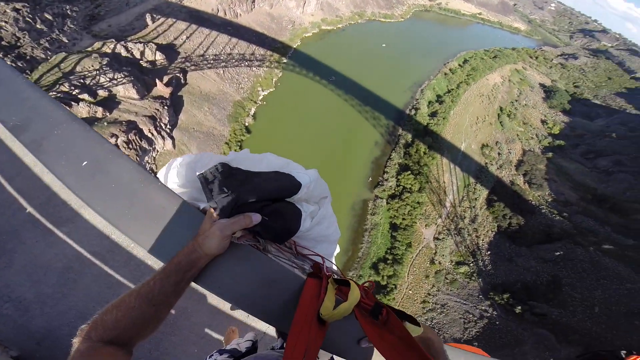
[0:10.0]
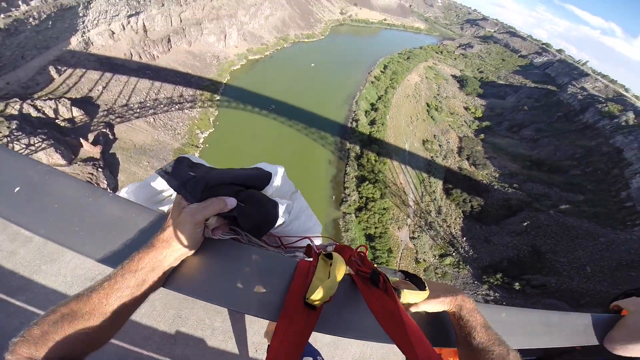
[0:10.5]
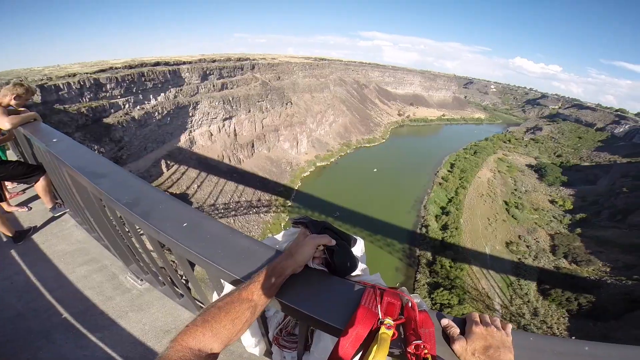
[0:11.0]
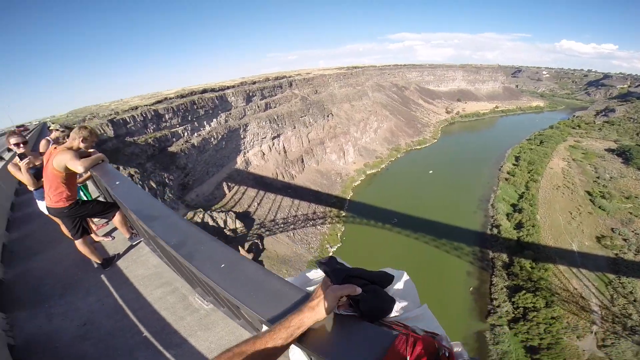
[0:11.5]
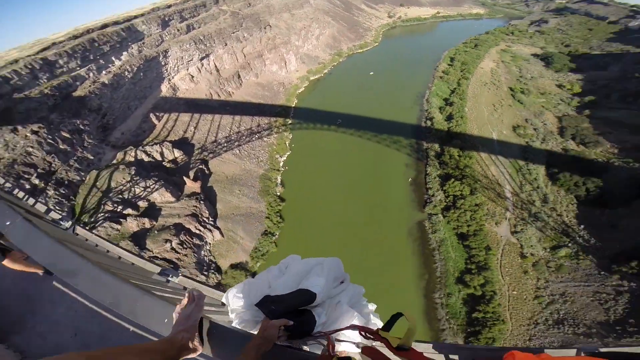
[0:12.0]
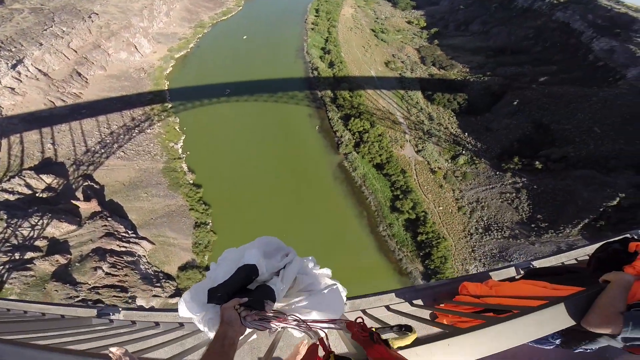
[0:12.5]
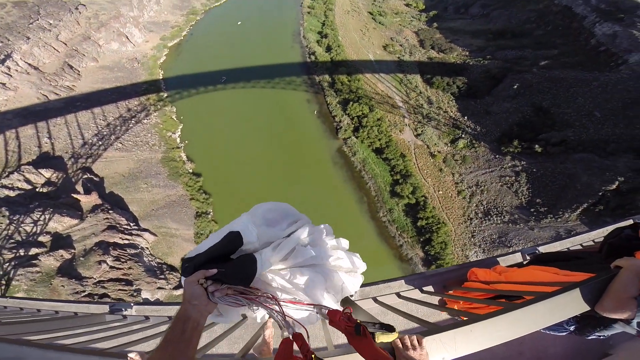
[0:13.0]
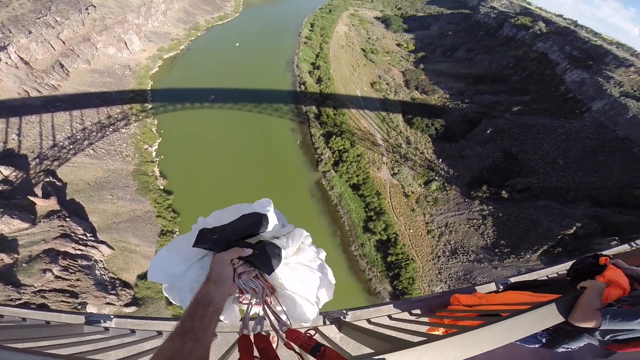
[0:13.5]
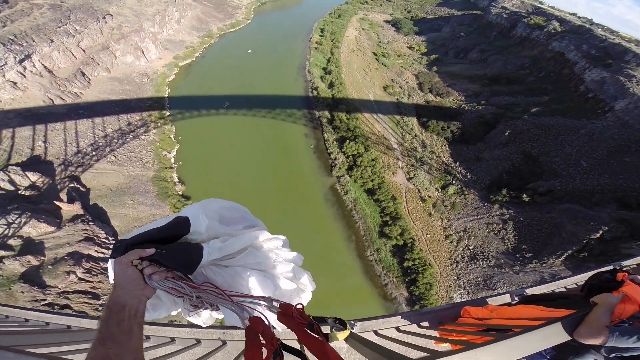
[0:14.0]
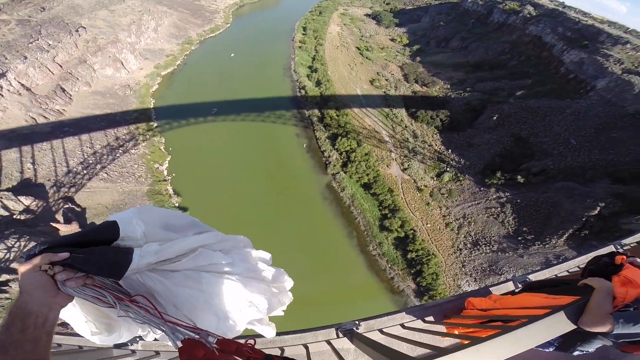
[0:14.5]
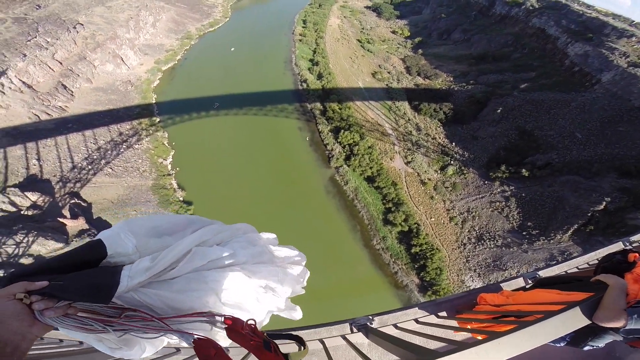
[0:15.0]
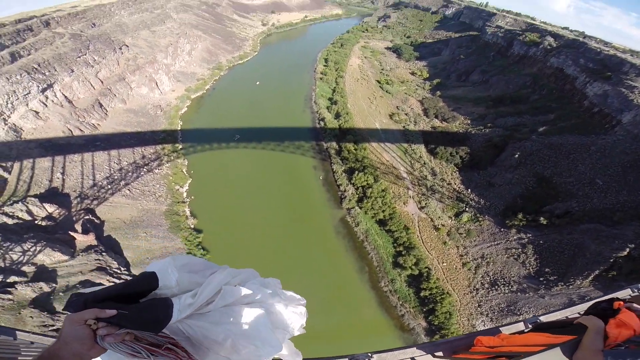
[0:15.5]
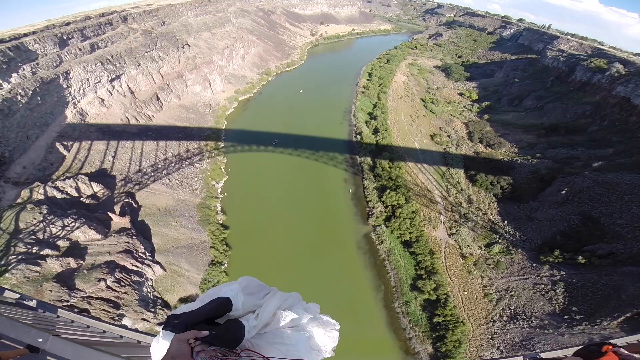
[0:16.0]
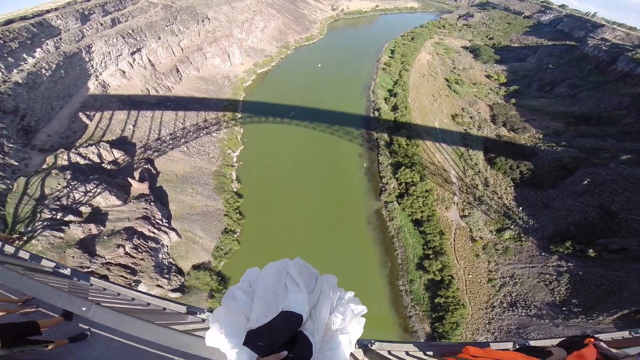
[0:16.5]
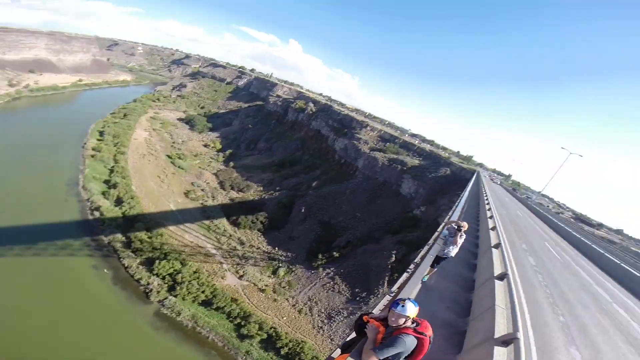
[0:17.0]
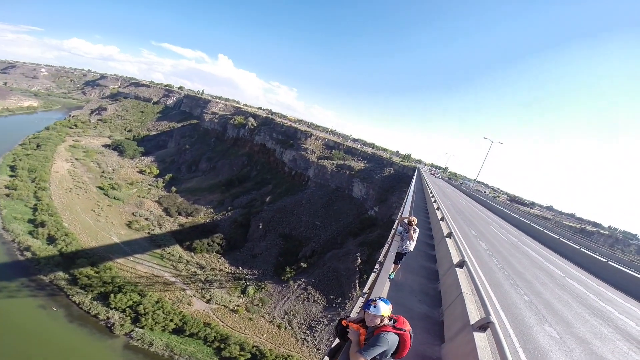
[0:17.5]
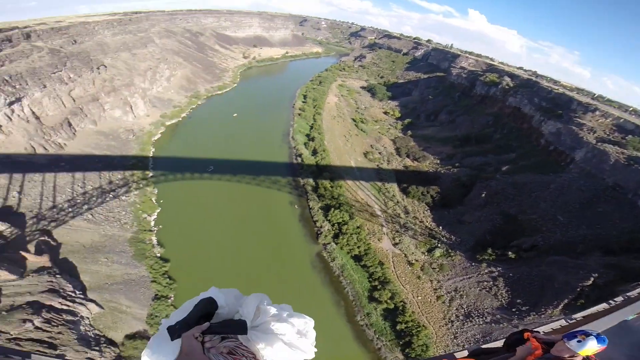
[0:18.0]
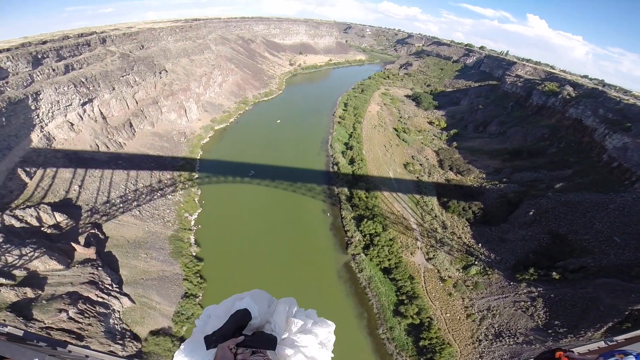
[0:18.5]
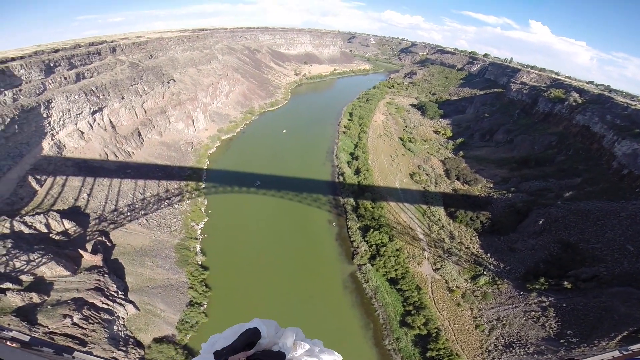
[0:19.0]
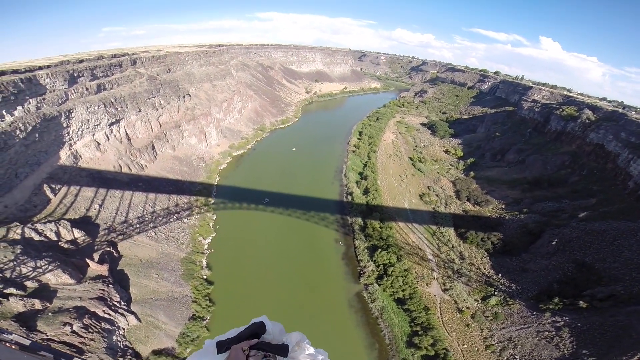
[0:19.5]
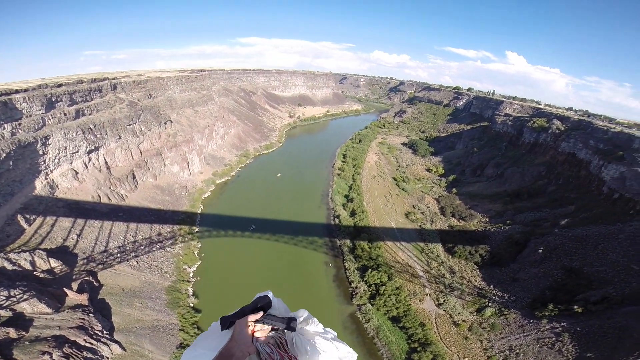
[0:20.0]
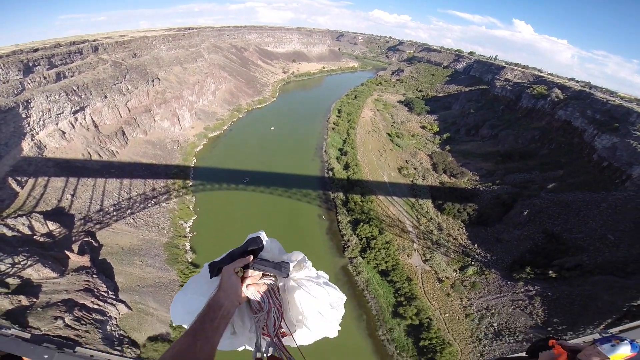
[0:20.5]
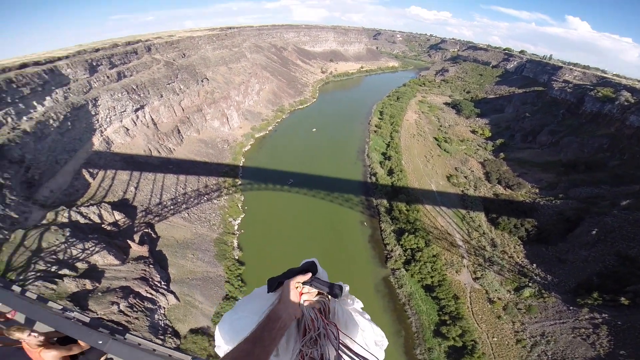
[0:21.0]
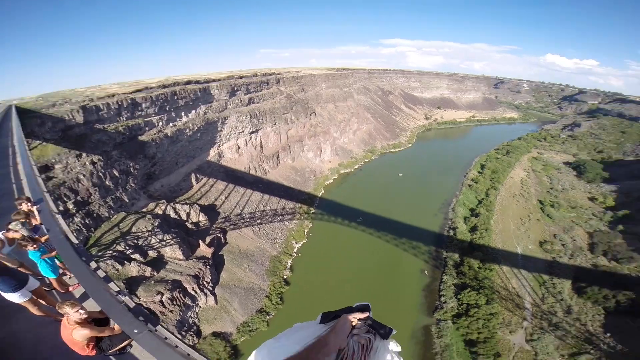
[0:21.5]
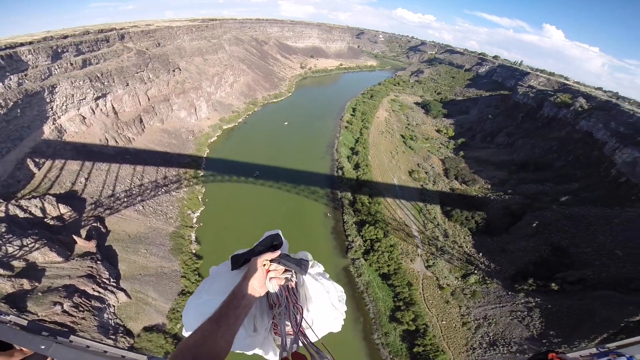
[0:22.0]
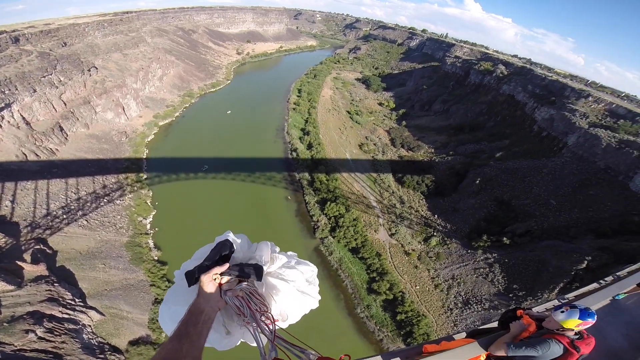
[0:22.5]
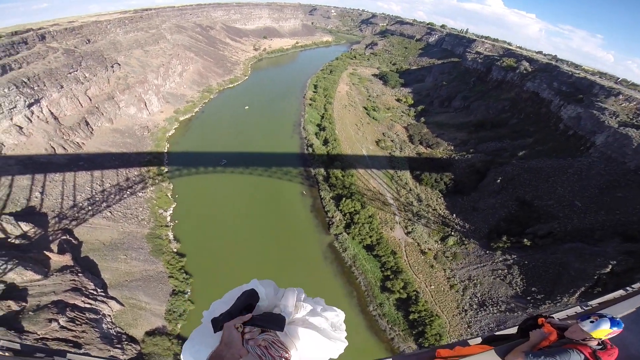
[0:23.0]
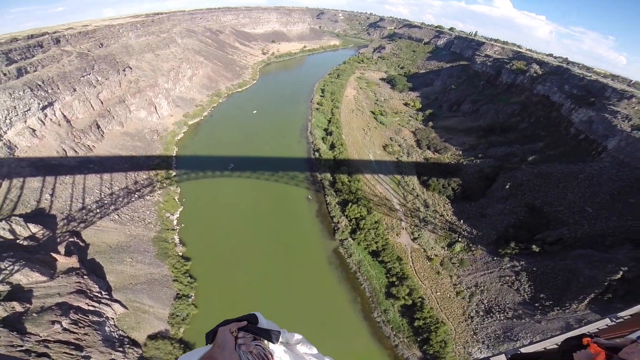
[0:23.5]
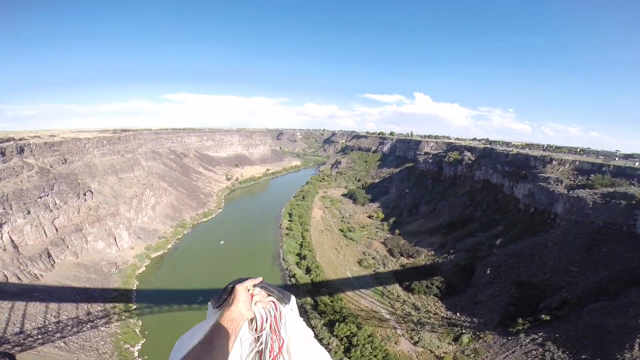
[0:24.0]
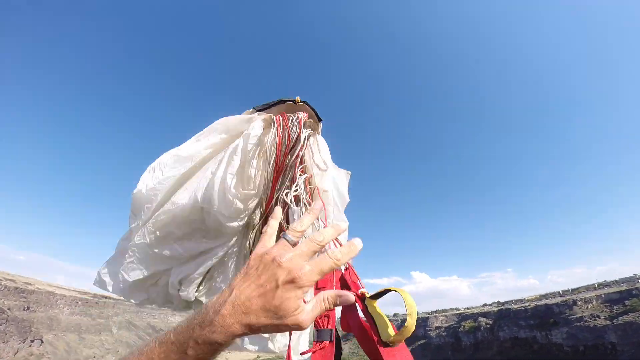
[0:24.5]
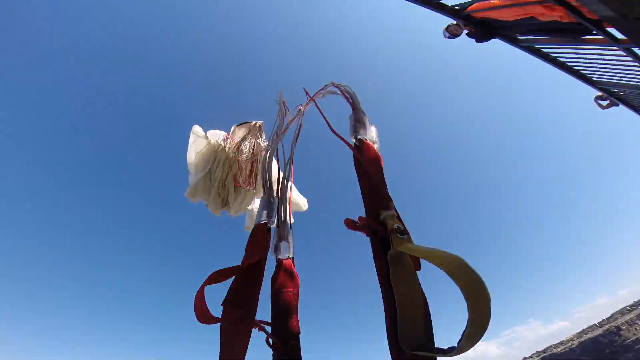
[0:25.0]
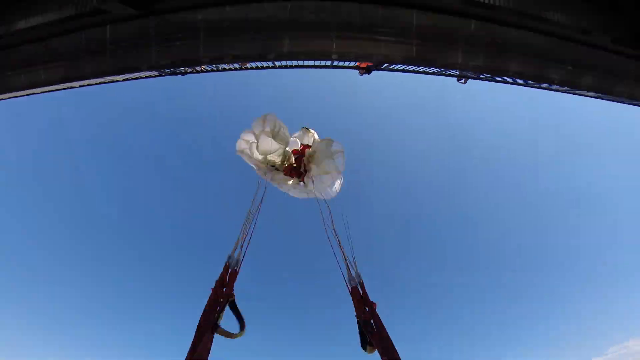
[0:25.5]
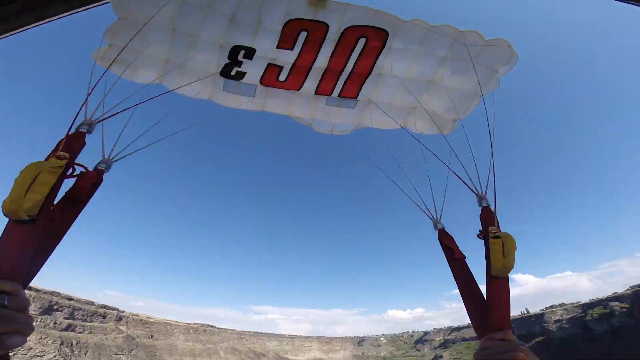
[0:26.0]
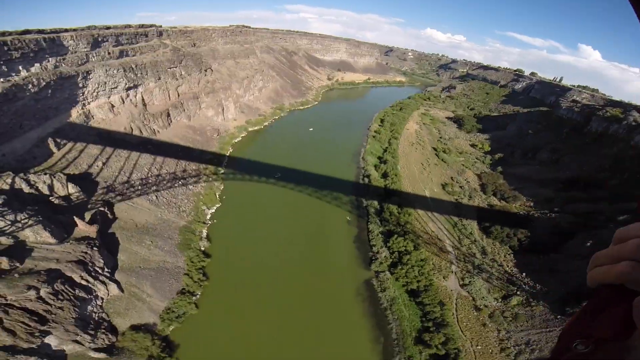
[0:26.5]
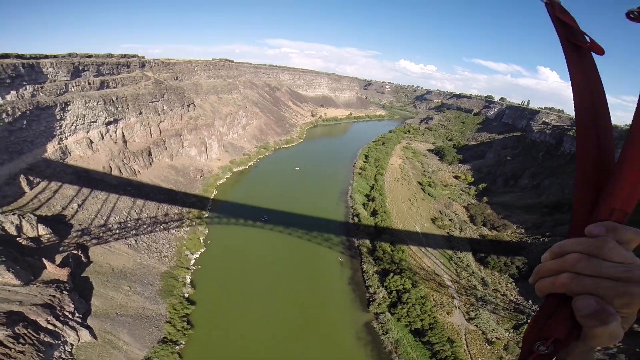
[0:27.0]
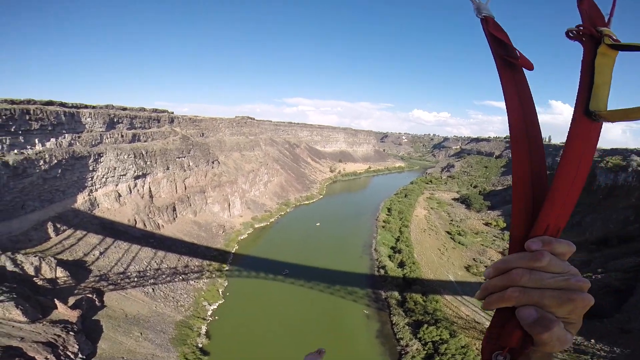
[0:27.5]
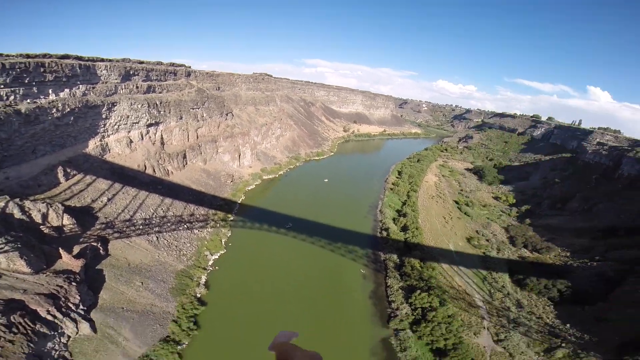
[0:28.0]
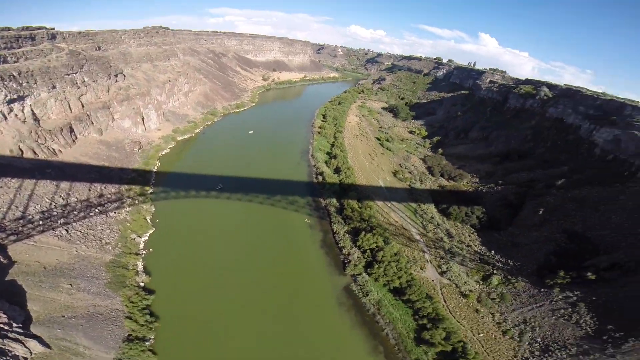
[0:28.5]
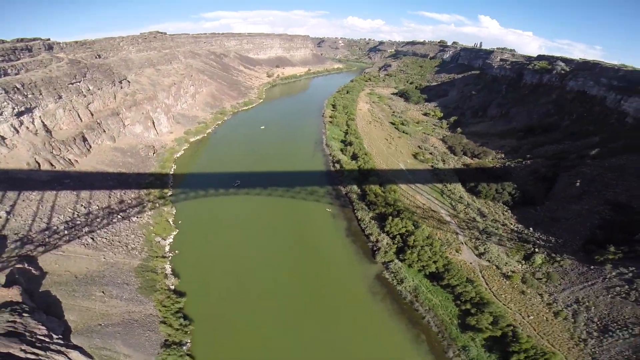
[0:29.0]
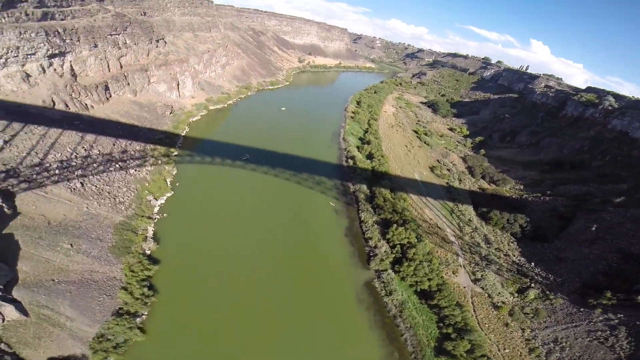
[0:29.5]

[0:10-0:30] Multiple individuals are briefly on the bridge. The camera moves quickly to the side, making it hard to see how the shot is taken. Two people are spaced out; it is hard to tell whether they are male or female, though the one at the far end seems to be a somewhat older female. There are other people on the left side. A person jumps off the bridge with relative ease and throws up the parachute as they jump, then starts to glide down. They apparently have no bungee or harness connected to the bridge. Some other people are next to the person; one of them on the right seems to be going next, wears a helmet and appears to have gear that is briefly visible. The left side seems to be where the onlookers are, and they do not seem to be dressed suitably.